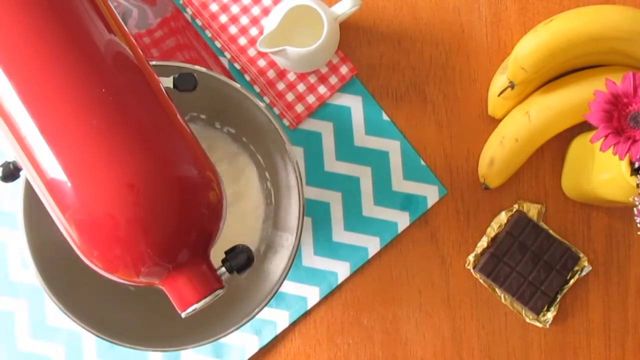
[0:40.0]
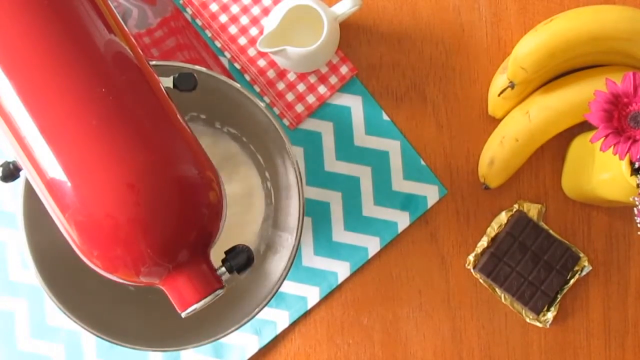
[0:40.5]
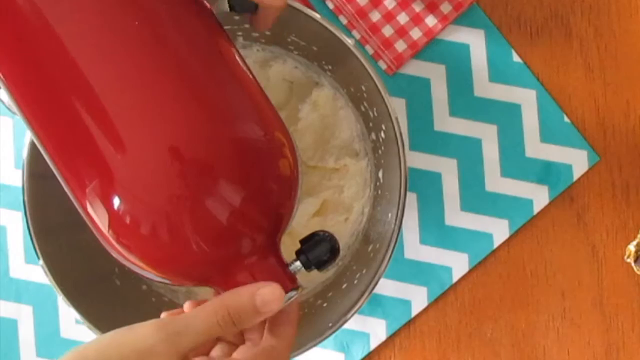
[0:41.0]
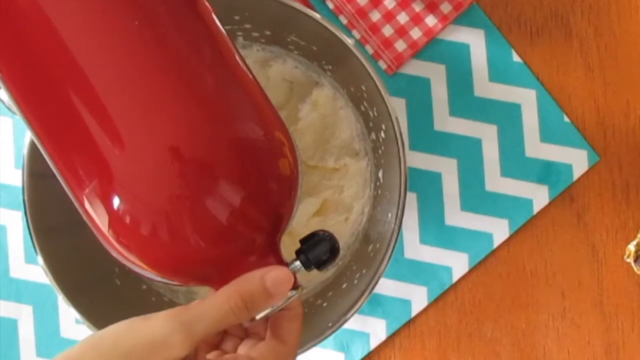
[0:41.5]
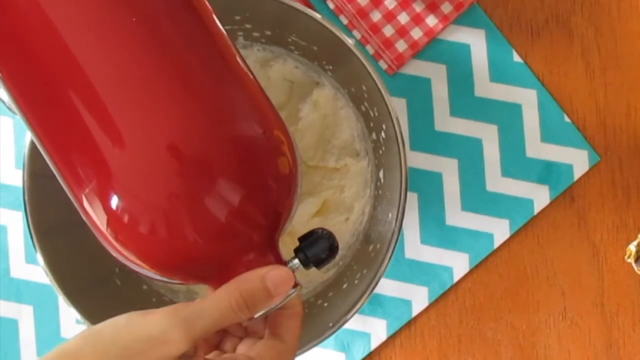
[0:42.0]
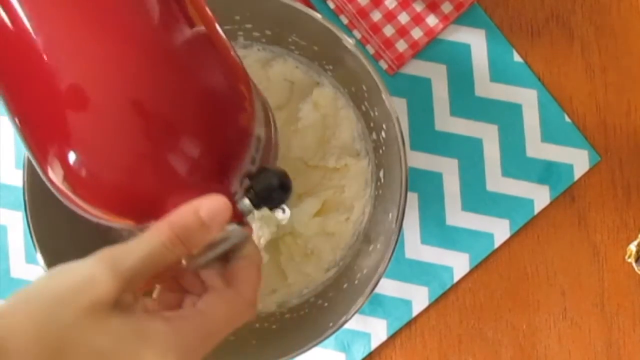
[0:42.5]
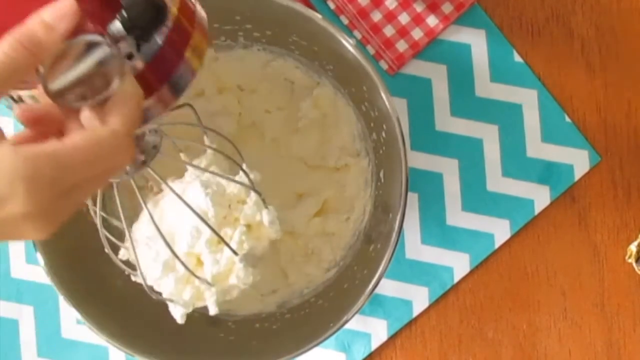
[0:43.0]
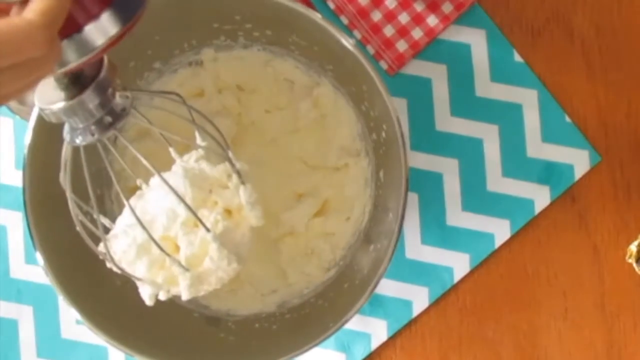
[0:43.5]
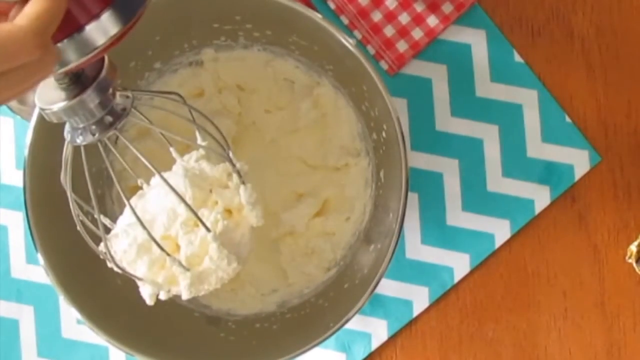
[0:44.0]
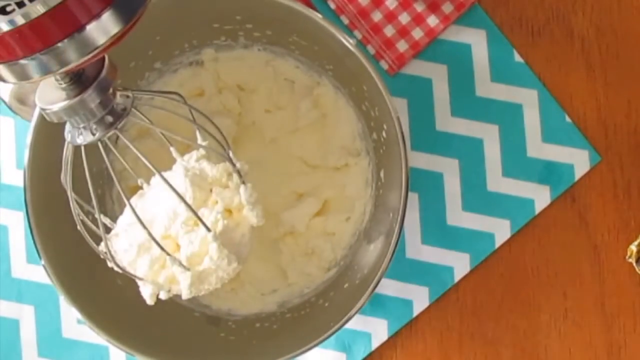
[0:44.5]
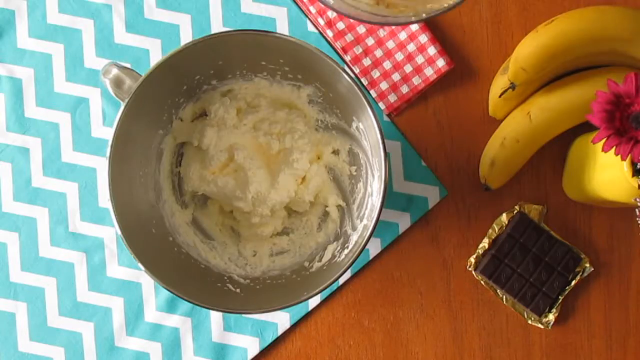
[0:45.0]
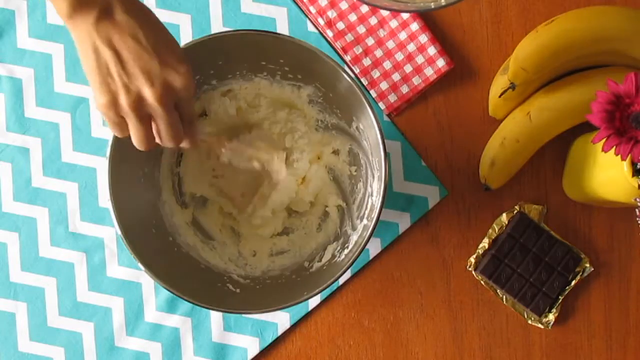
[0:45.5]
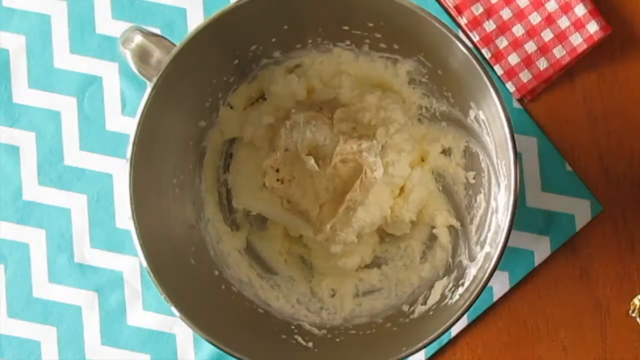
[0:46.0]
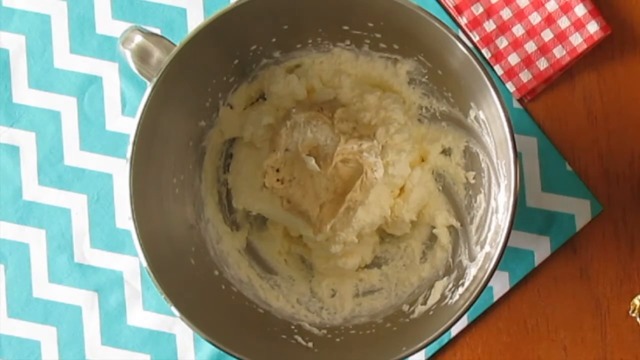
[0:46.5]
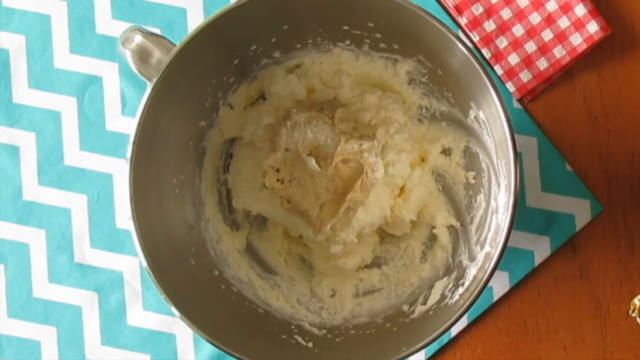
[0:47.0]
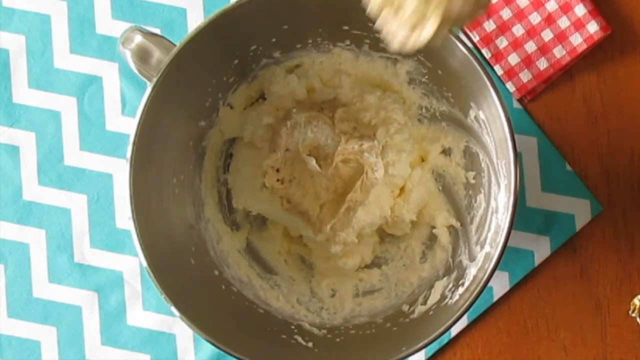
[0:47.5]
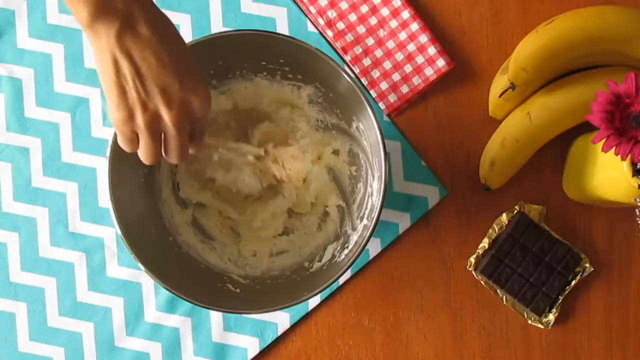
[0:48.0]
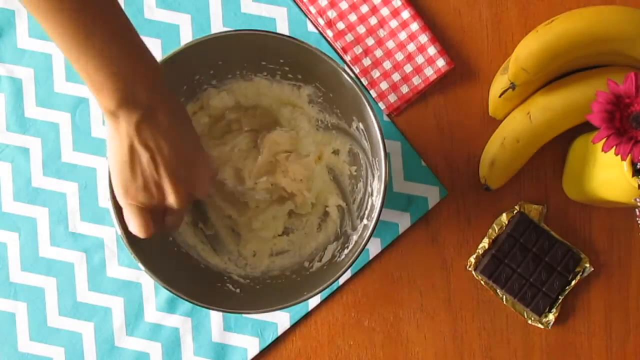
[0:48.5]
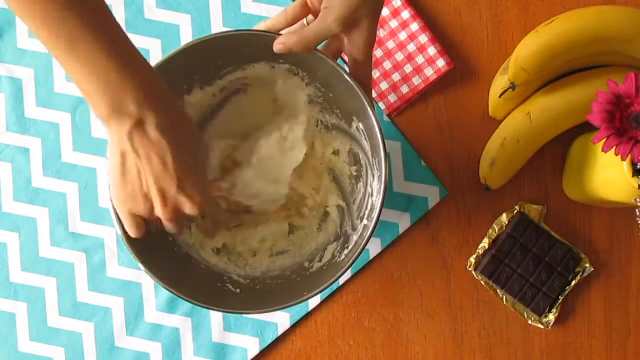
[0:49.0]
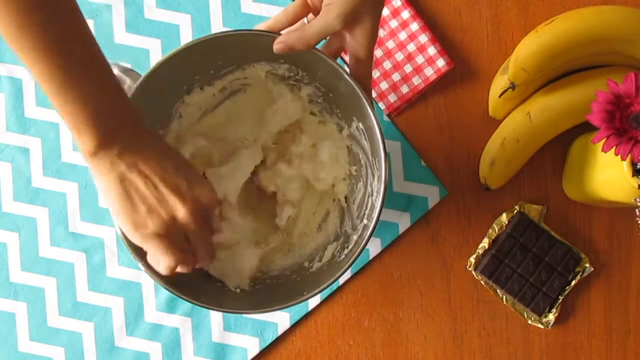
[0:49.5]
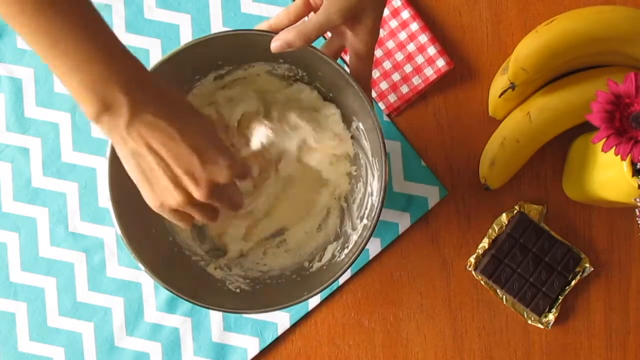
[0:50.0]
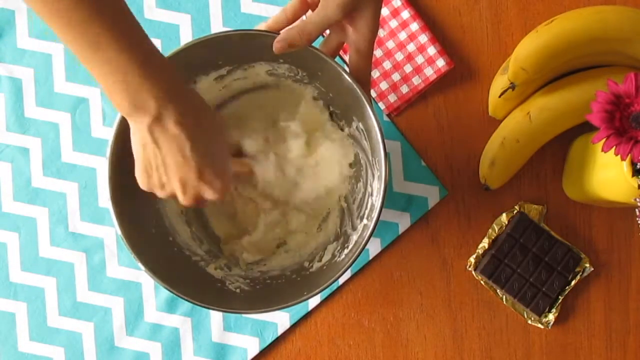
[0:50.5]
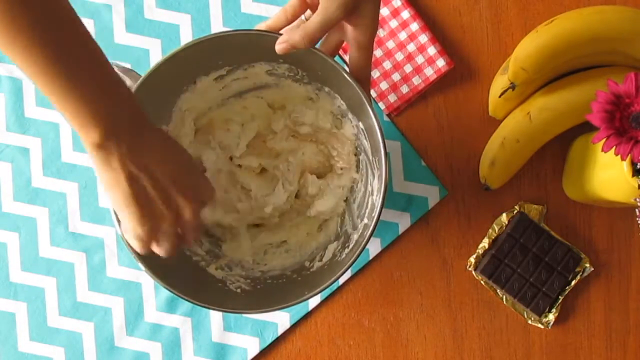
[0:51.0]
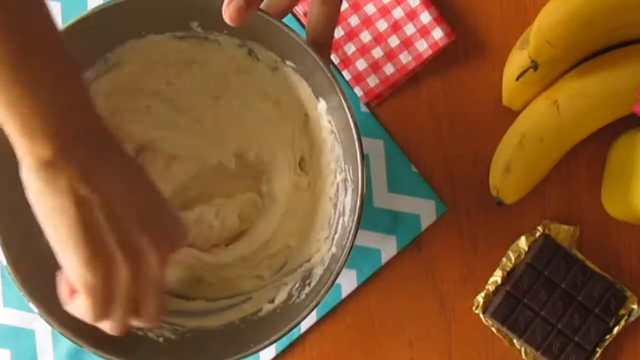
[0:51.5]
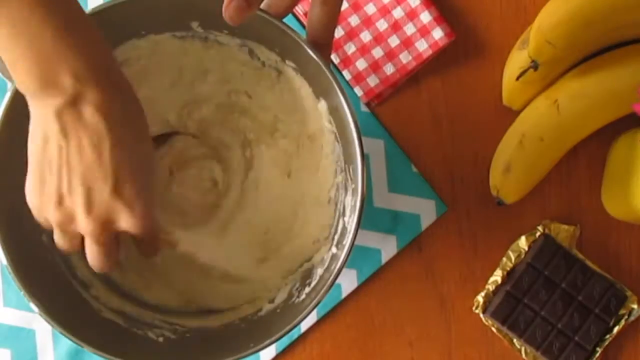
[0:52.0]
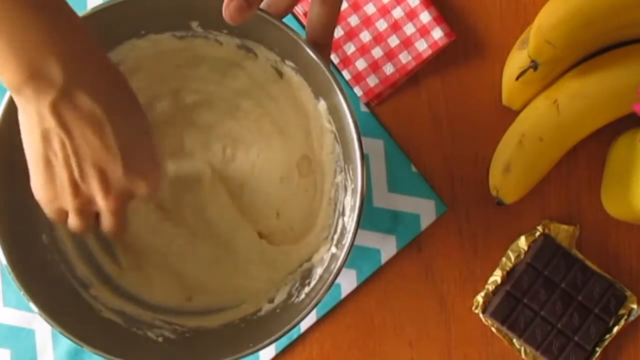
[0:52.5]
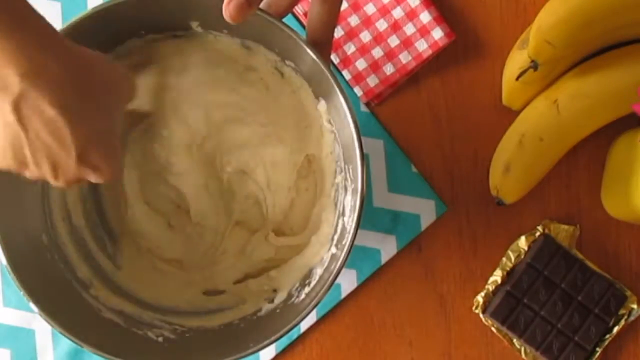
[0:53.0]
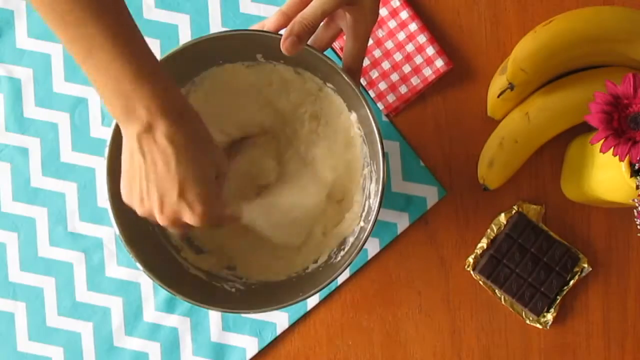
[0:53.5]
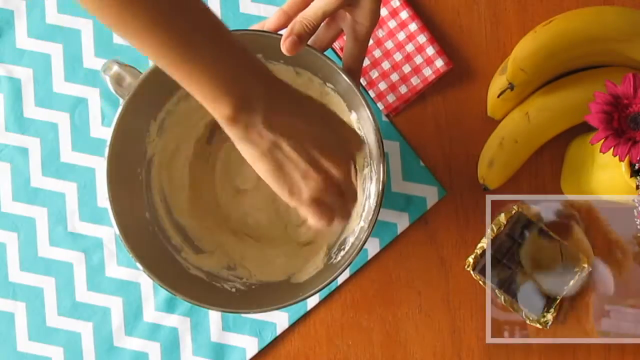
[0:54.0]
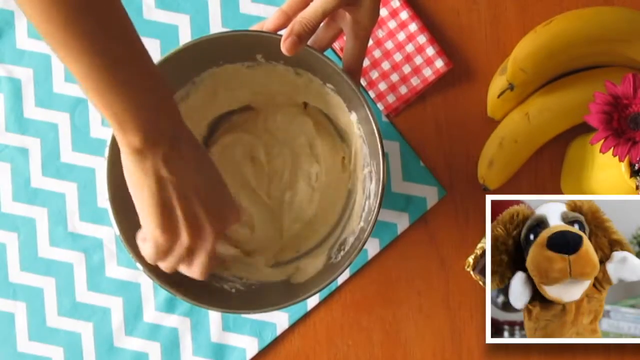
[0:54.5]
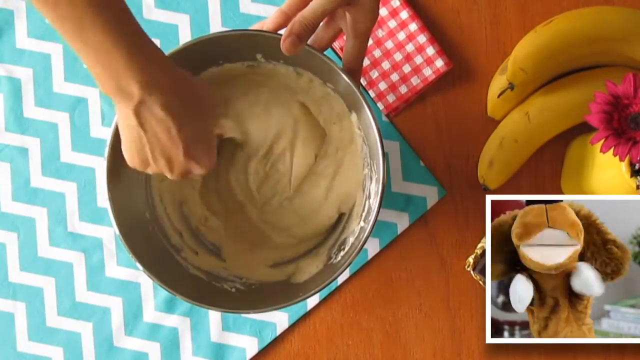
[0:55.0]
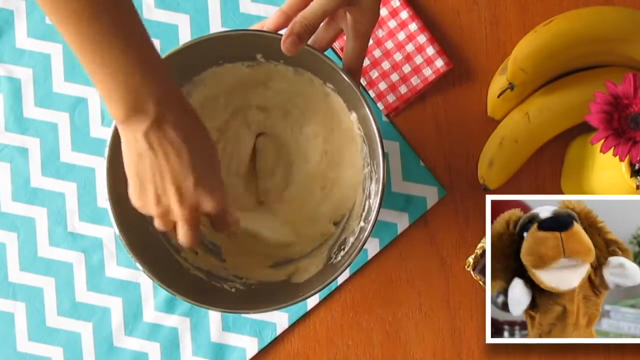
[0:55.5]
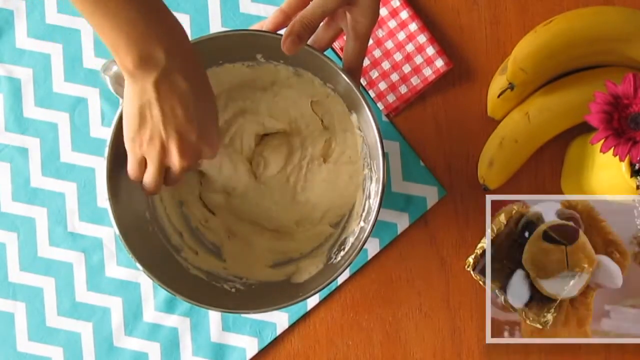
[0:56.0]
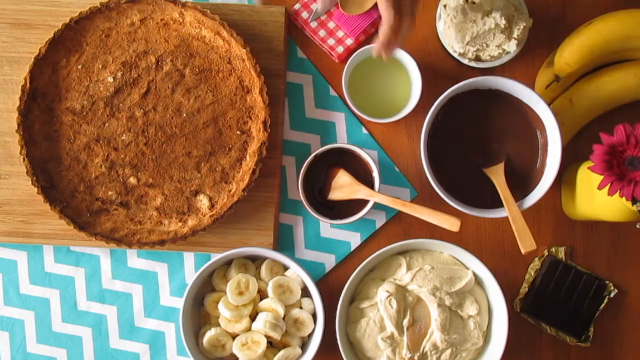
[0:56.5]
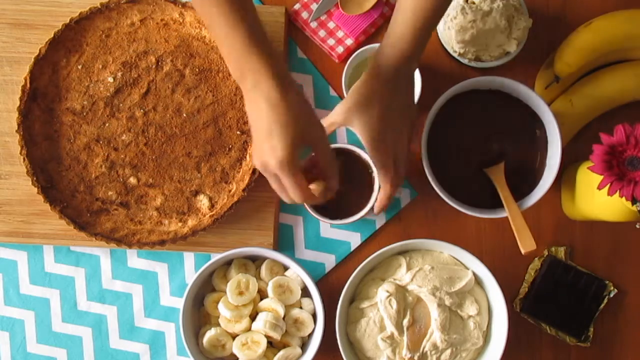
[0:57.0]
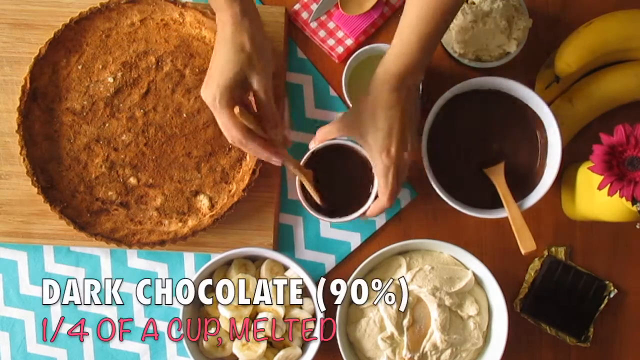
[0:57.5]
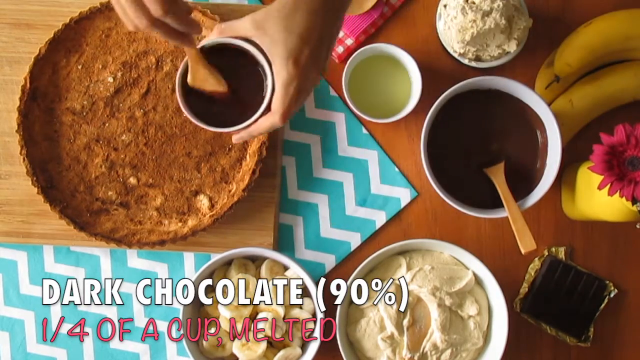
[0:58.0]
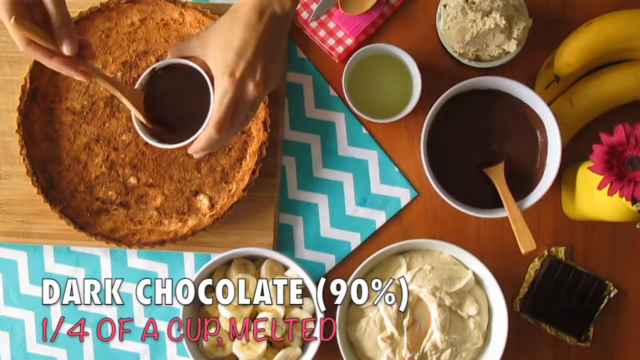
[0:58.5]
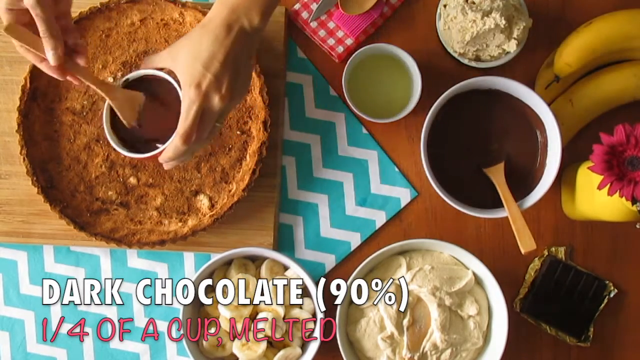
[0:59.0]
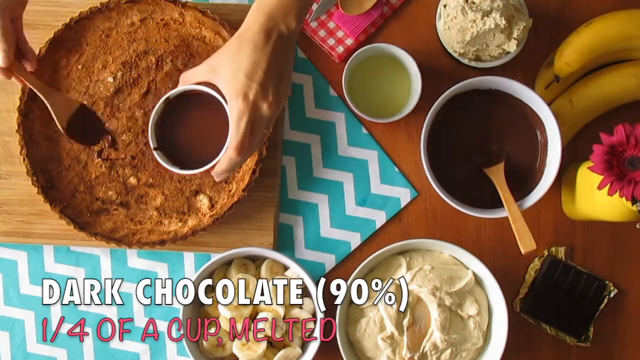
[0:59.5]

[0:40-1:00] The wooden table has three whole bananas and some solid chocolate on it, along with a blue and white waved tablecloth and a red and white gingham napkin with a jug of cream on it. The red whisk whips up the double cream, and a hand pulls up the top of the whisk, showing that the cream has turned solid. The other part of the recipe is added to the whisk, and hands mix it with a spatula in a clockwise motion. The dog puppet appears in the bottom right-hand corner of the screen. The video cuts back to the first shot with all the ingredients, instructing to add 90% dark chocolate to the bottom of the pie base, and the hands demonstrate by using a small wooden spoon to place the melted chocolate into the base of the pie.